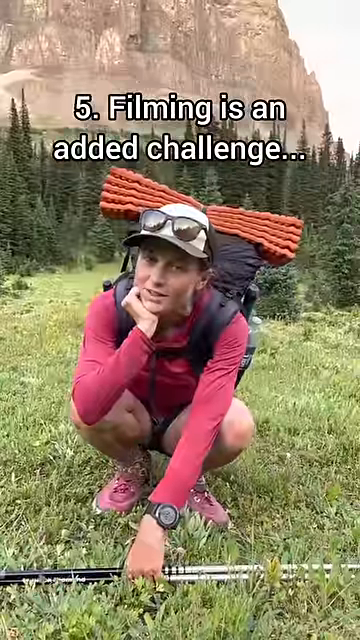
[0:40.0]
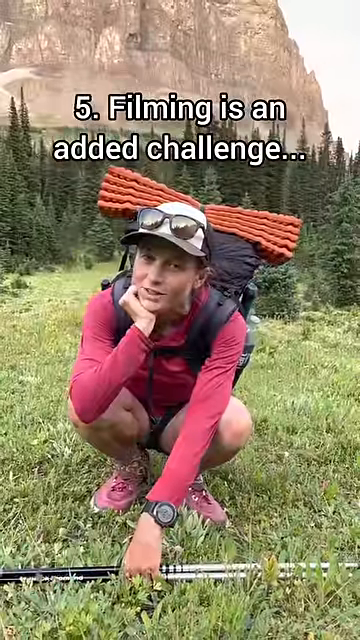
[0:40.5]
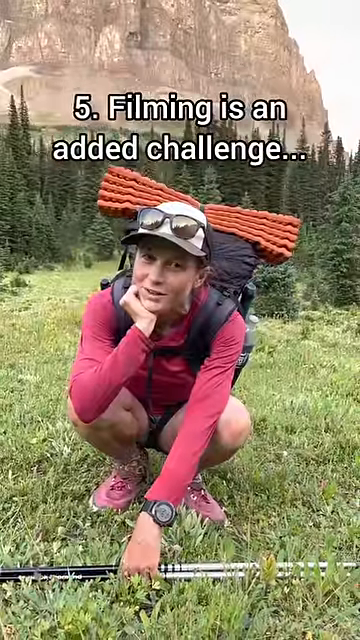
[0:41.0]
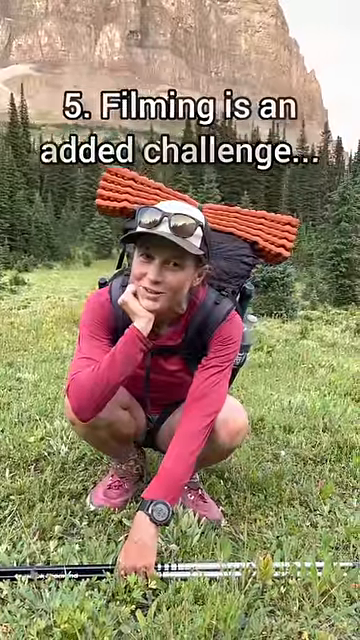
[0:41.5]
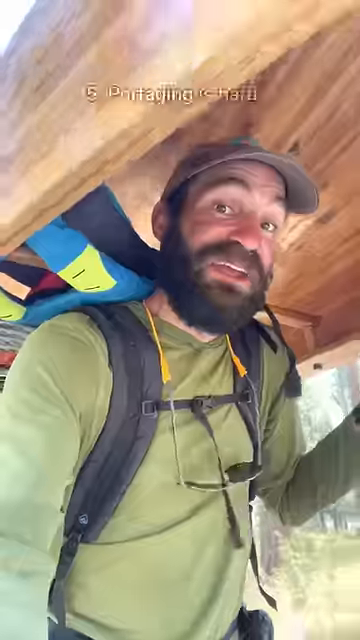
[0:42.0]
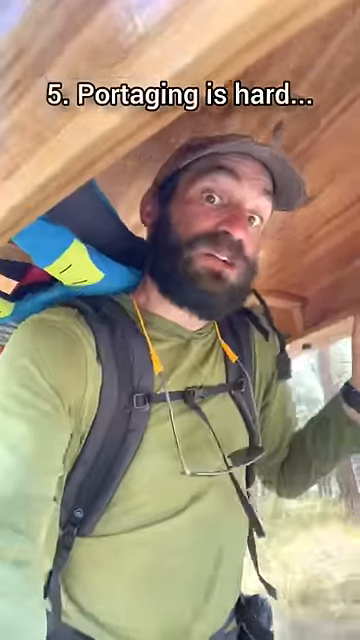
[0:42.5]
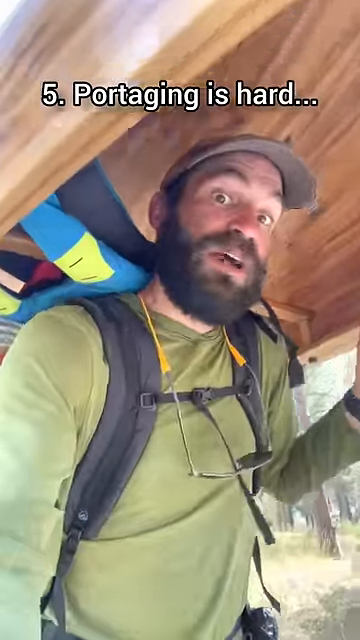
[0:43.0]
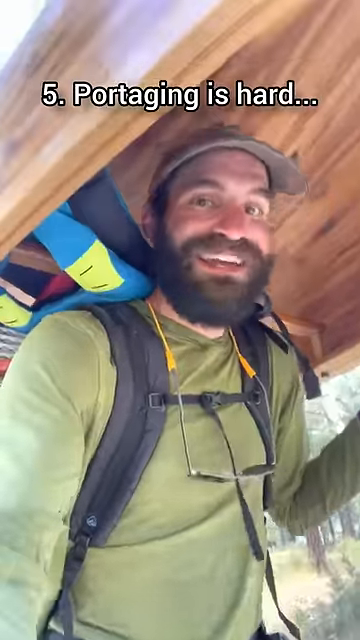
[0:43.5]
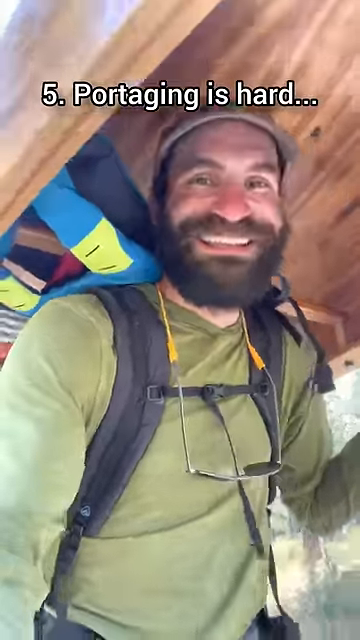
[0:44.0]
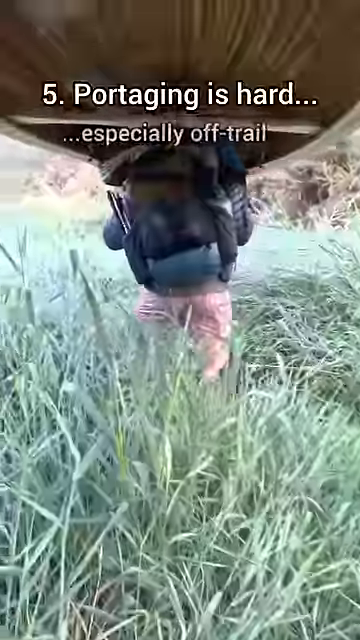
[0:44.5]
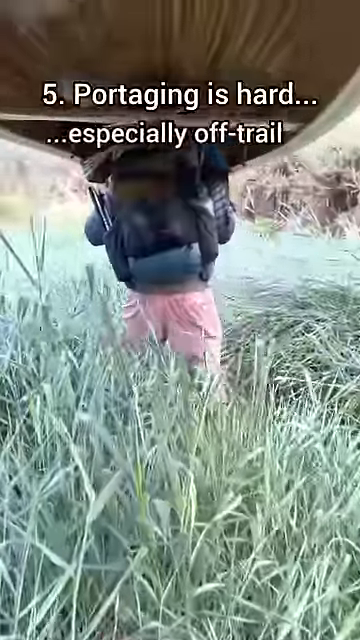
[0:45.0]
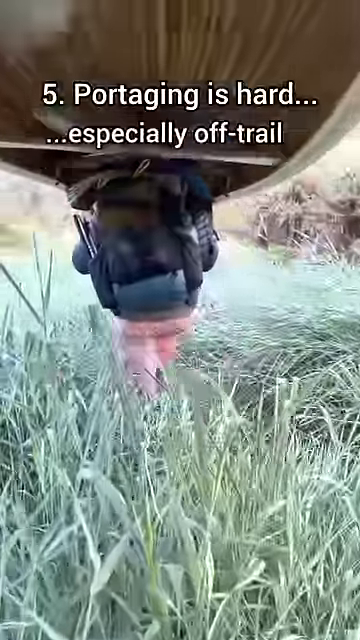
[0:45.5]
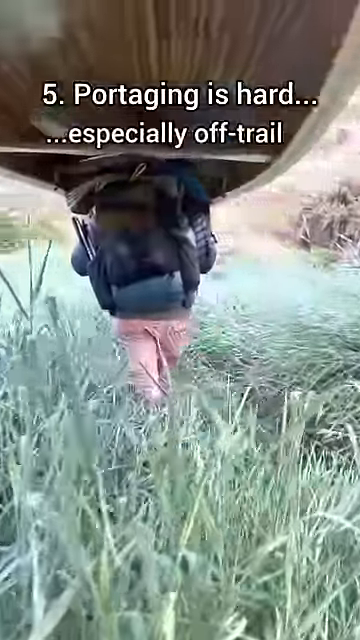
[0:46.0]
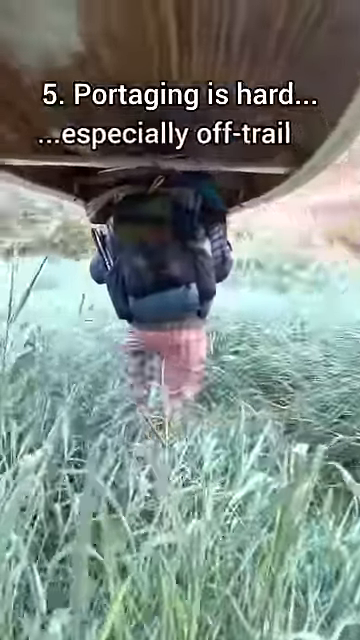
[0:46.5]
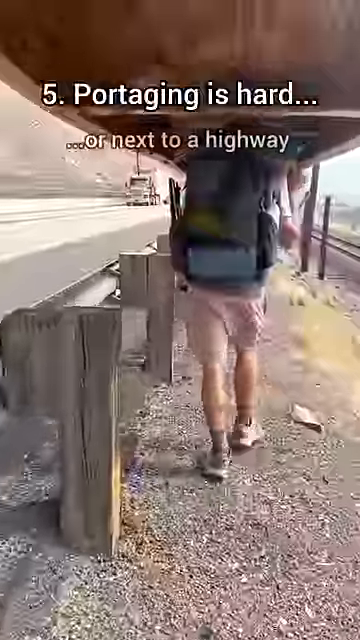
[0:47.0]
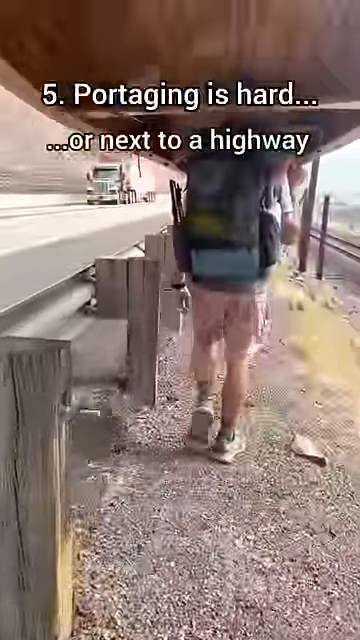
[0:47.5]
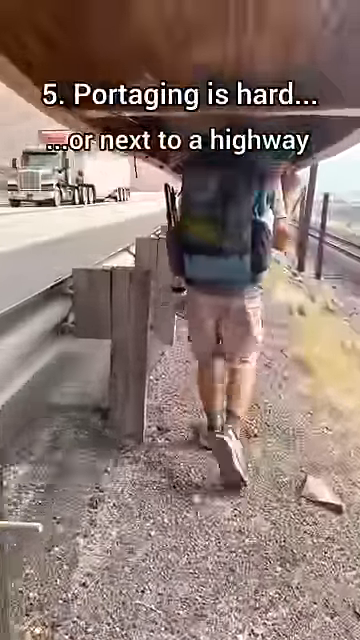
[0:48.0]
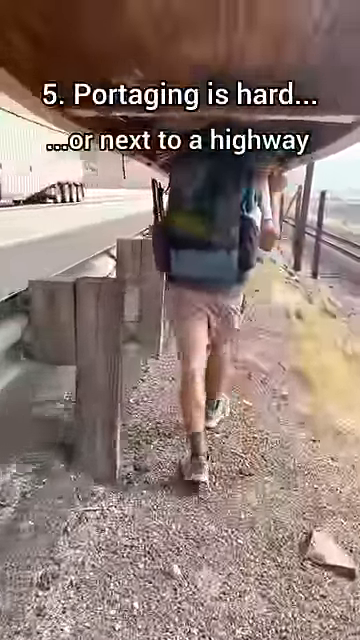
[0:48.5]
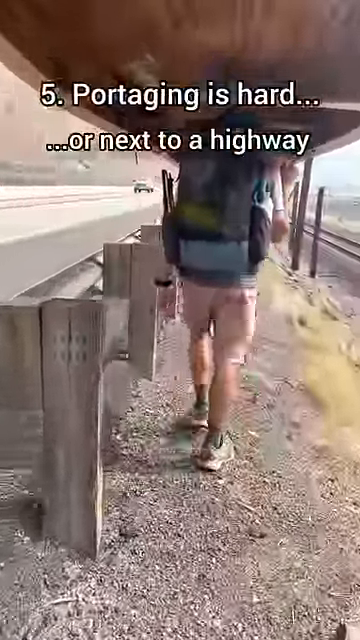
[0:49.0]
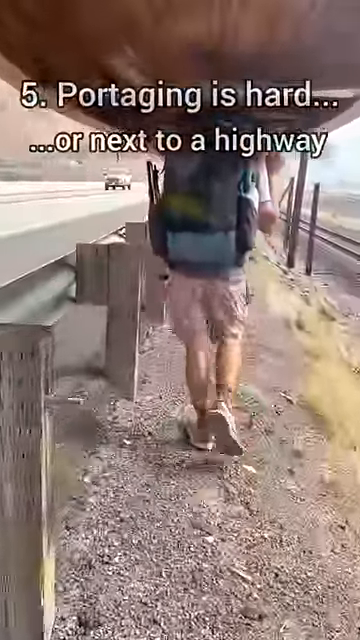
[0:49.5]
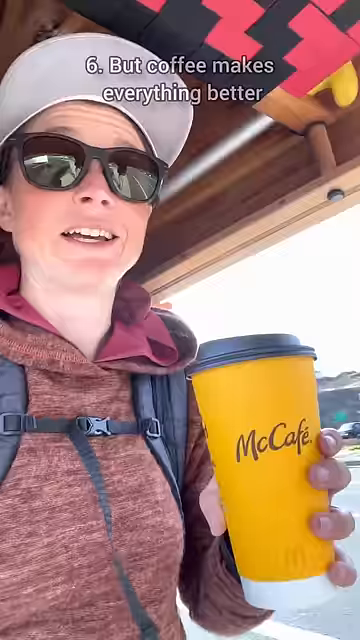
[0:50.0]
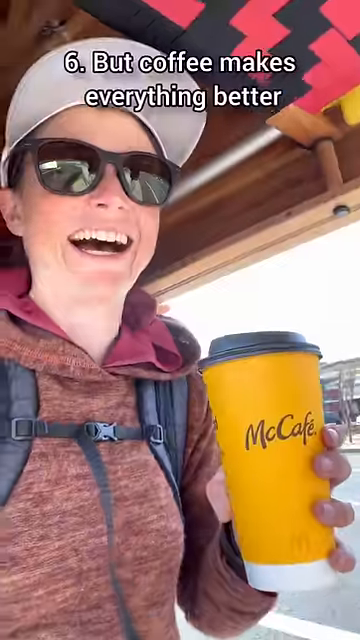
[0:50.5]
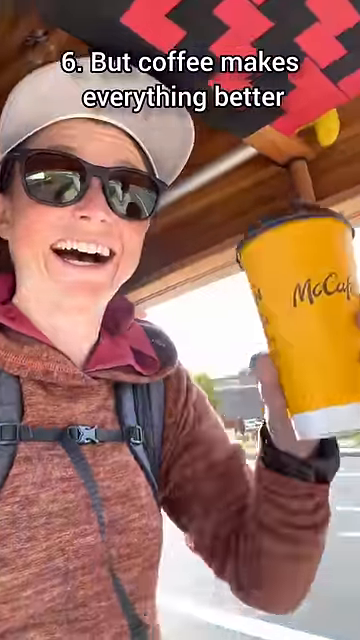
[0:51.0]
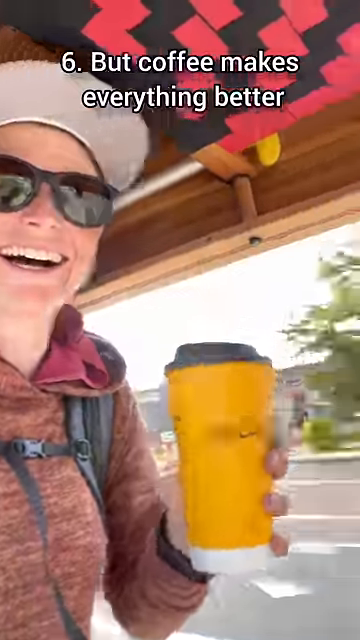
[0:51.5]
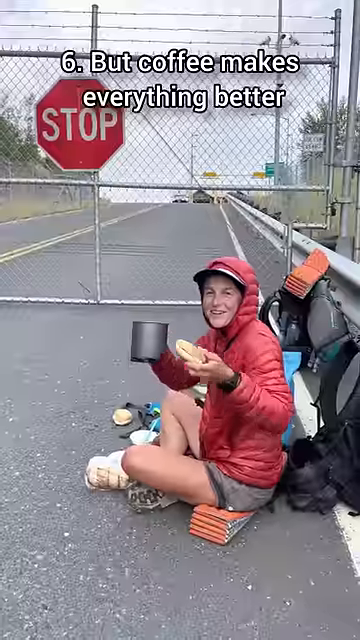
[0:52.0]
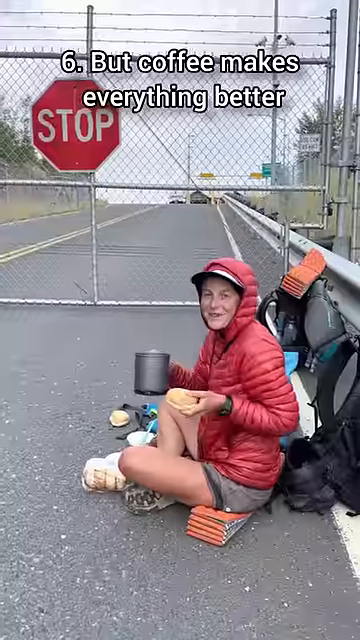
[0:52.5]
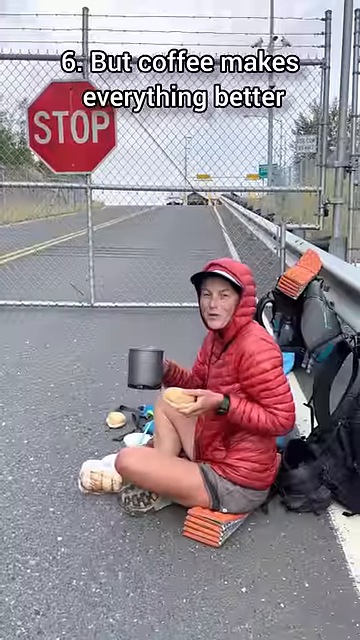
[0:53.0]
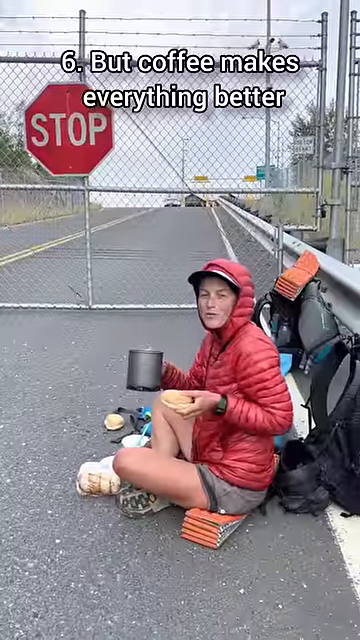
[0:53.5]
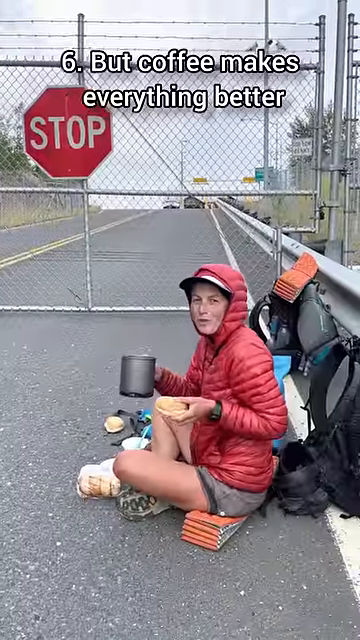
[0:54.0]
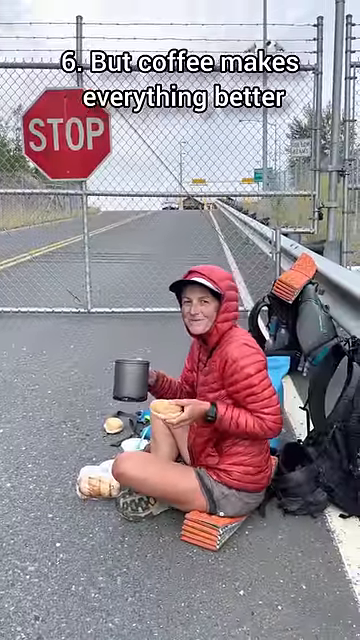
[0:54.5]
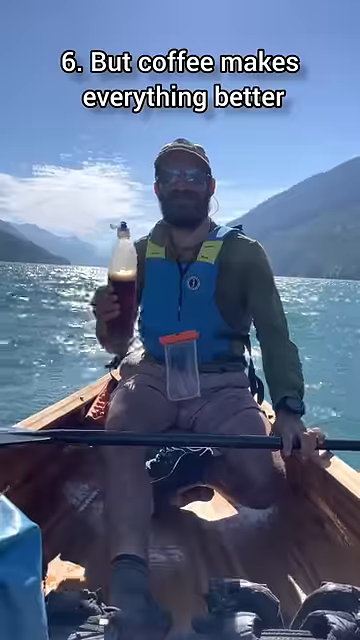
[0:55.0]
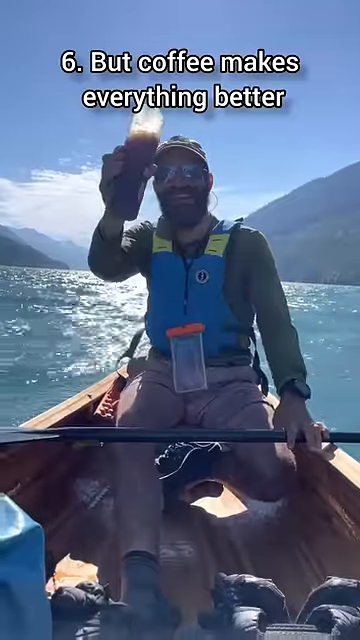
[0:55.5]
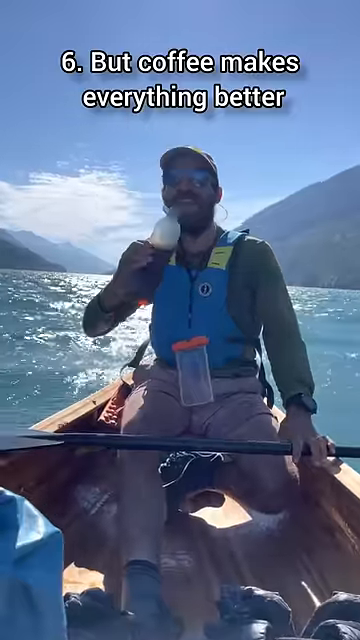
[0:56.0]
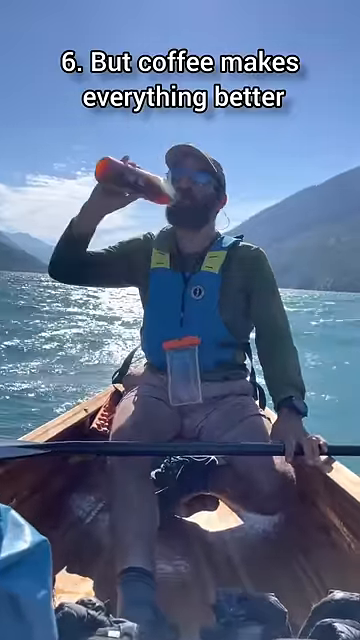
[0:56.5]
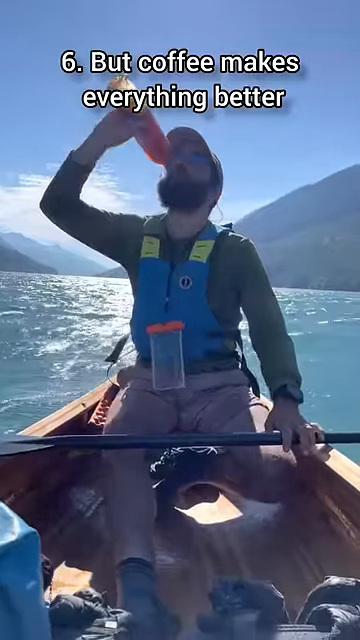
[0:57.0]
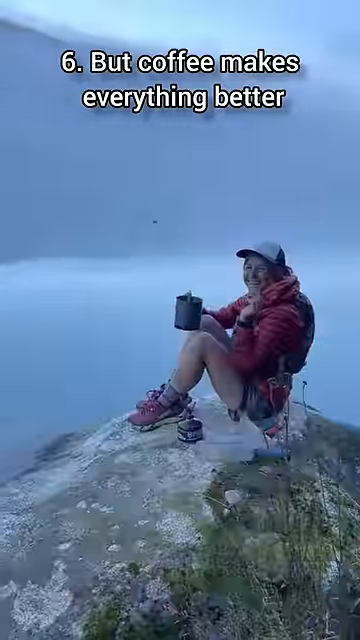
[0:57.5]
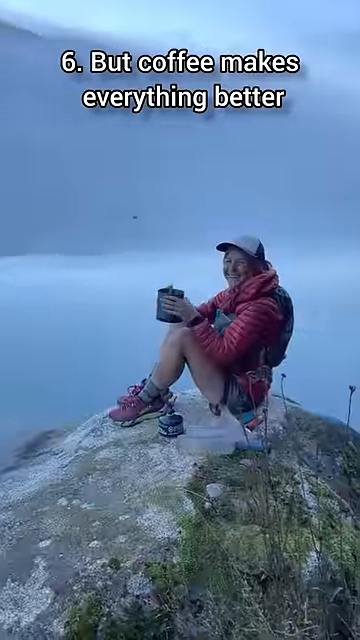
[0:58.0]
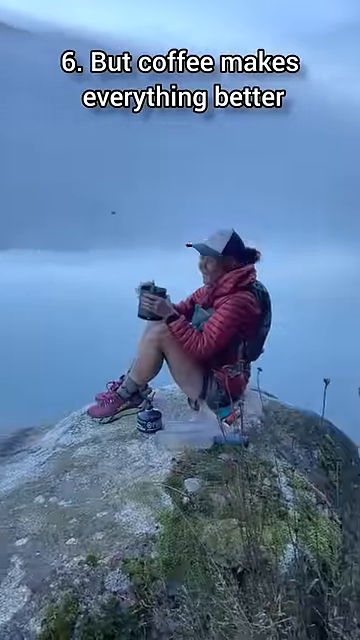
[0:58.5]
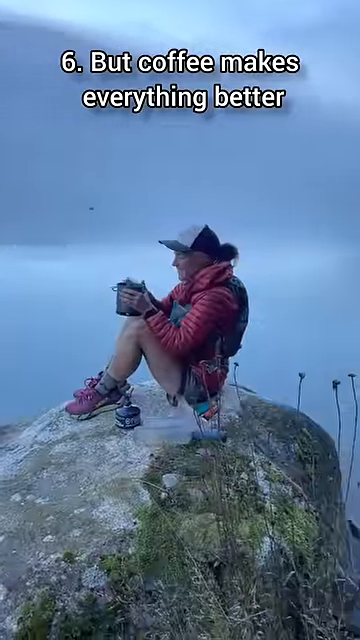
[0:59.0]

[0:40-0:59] The two people carry the canoe. They get some coffee, eat a little and drink a little as they continue their trek, apparently along the Pacific Northwest Corridor. Text reads "portaging is hard, especially off trail." They seem happy. At one point they appear to be on a highway that looks pretty busy, and there is a closed fence. The scenery changes dramatically in spots, going from grassland to highway to areas near rivers. A young woman sits on a big rock by what looks like either a lake or a big river; she might be eating McDonald's.